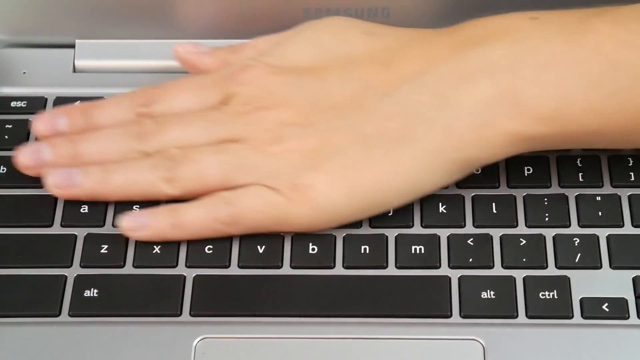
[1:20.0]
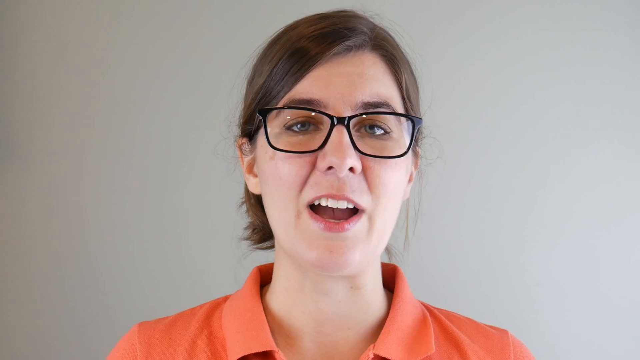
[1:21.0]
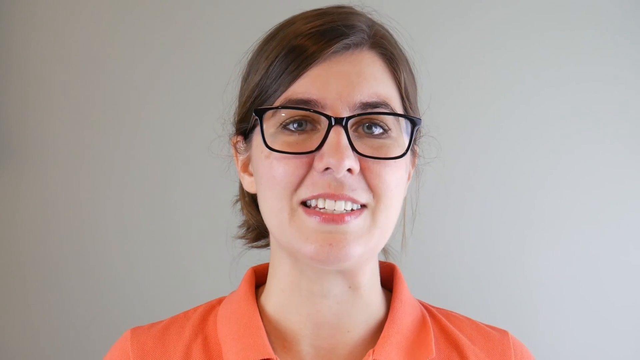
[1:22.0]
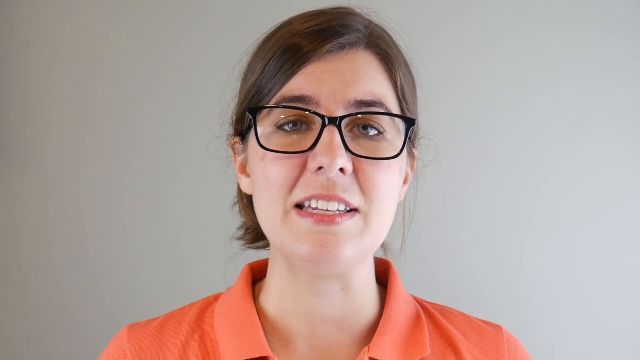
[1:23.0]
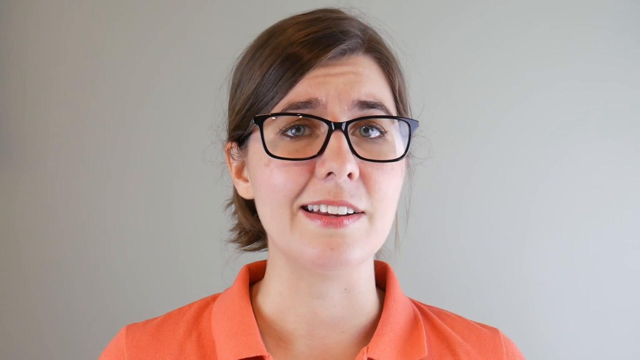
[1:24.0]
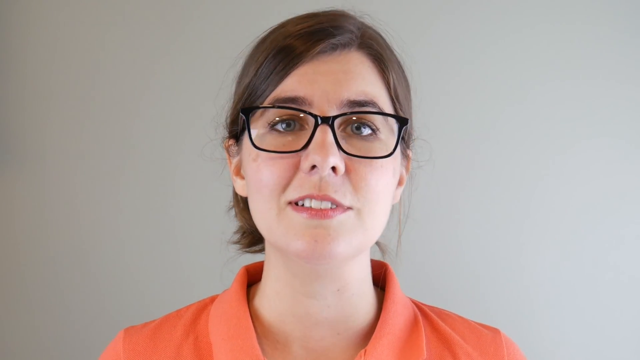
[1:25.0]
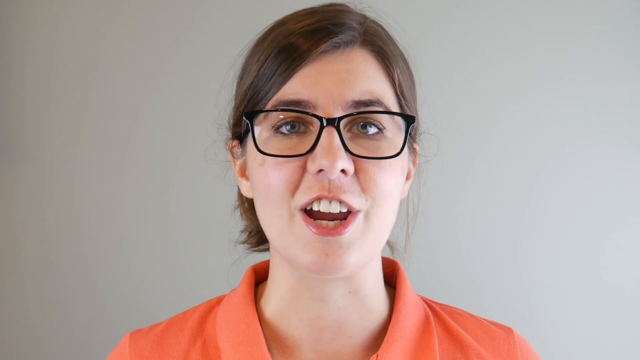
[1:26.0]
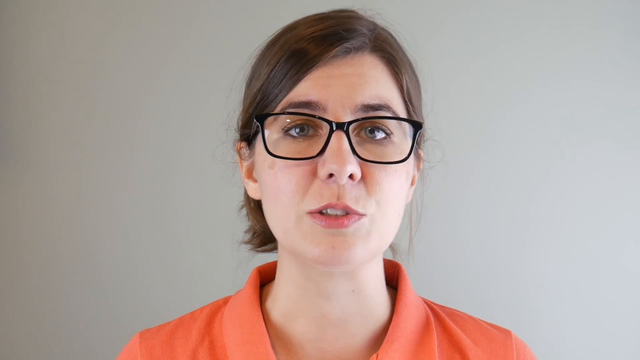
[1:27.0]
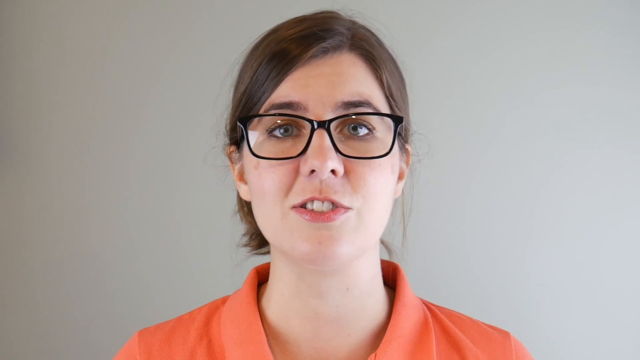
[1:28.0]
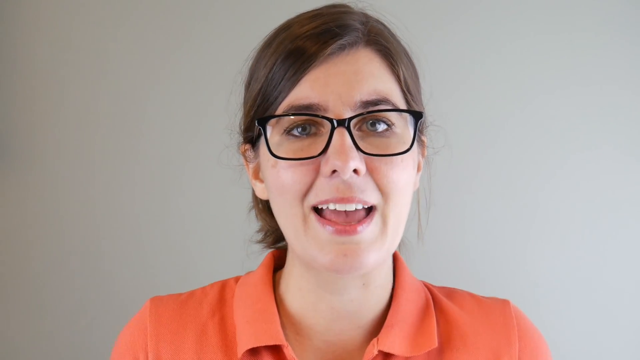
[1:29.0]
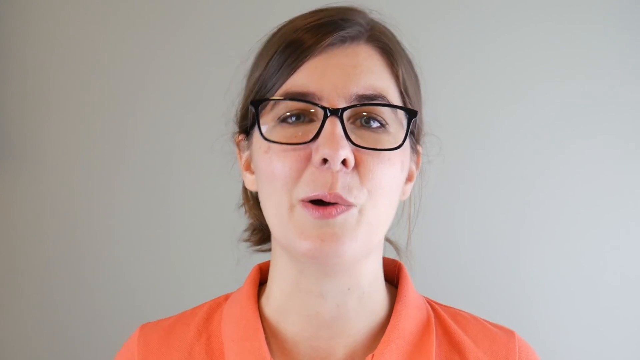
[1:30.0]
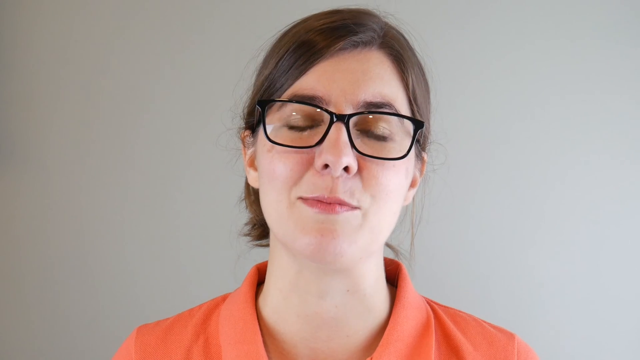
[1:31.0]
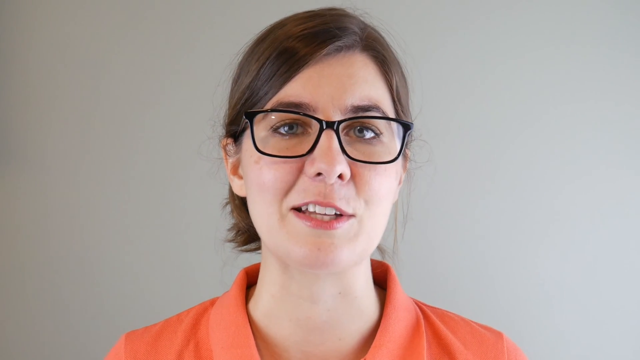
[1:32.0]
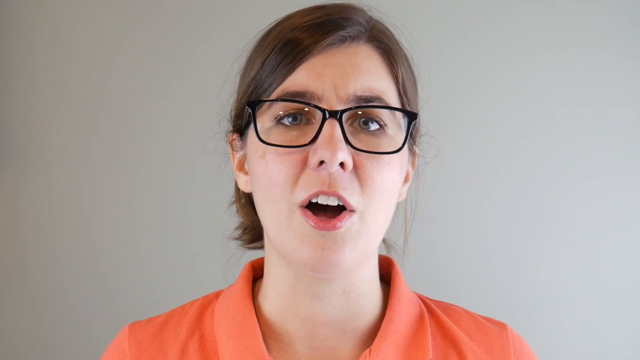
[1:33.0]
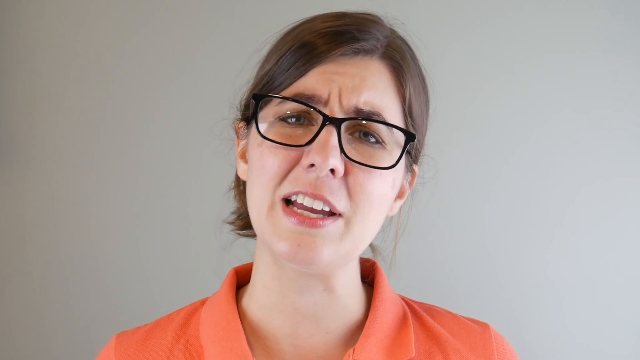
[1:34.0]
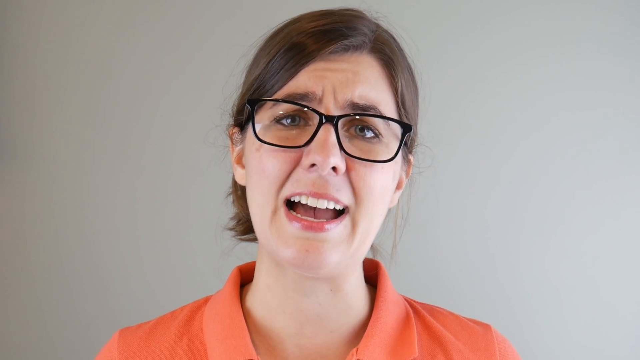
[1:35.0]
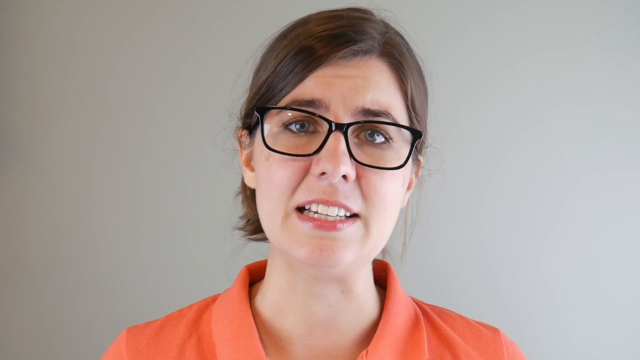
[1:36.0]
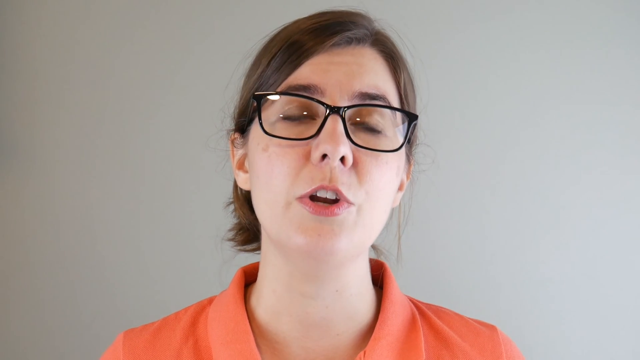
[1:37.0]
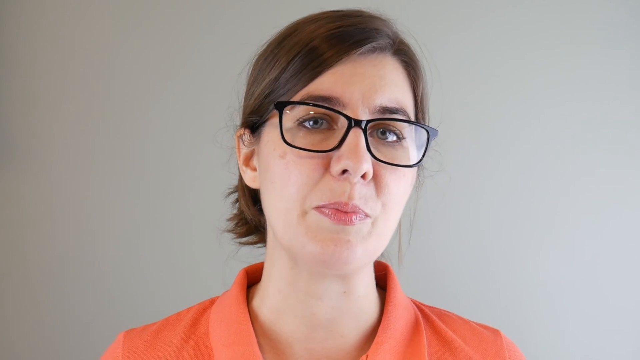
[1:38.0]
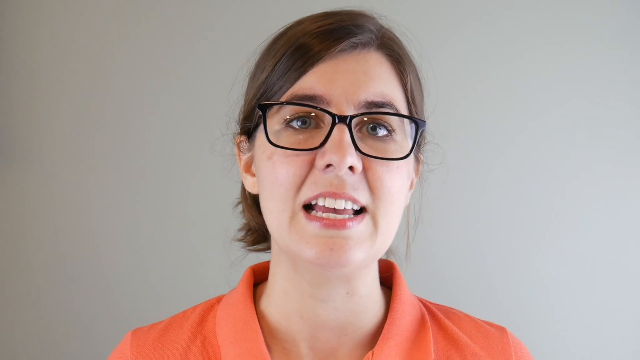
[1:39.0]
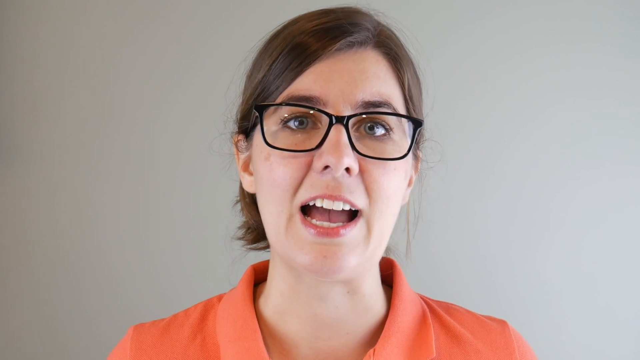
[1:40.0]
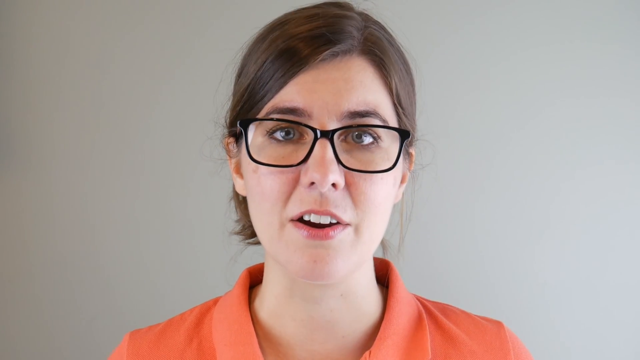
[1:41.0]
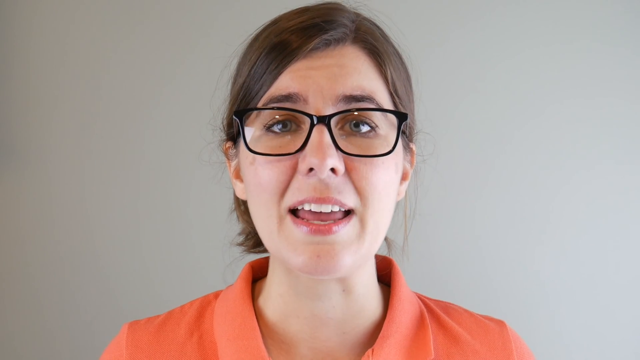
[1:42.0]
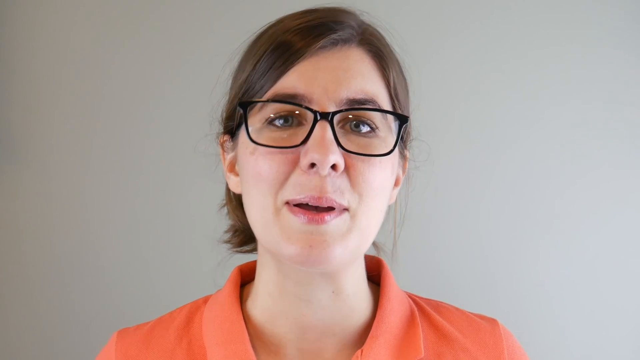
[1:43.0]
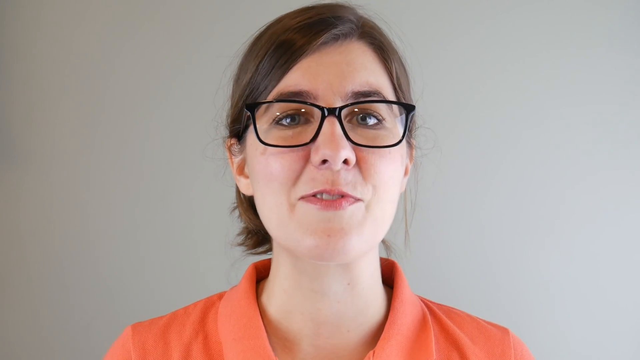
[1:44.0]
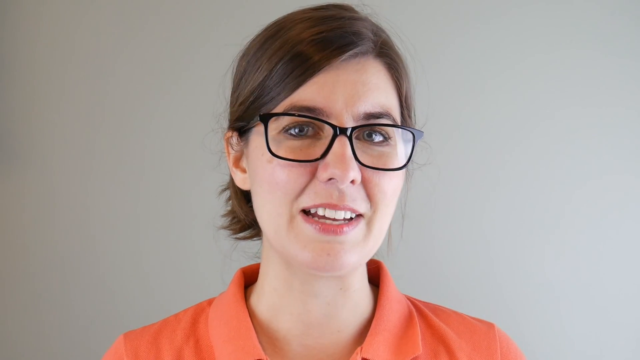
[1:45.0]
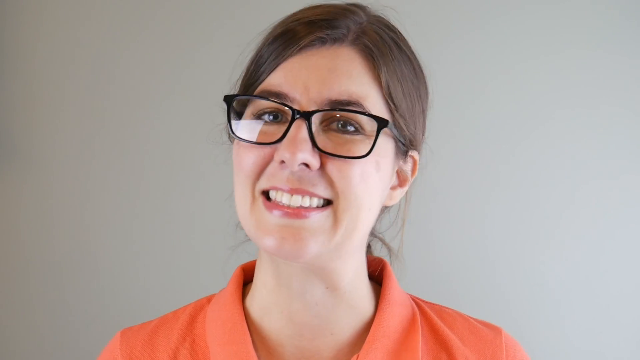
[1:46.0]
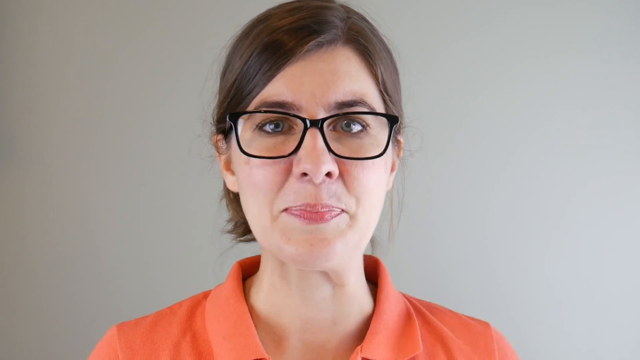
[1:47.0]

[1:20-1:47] His palm and fingers kind of rub back and forth over various keys on the keyboard. Then a woman appears, seen from the neck up, looking directly at the camera. She has brown hair and black glasses, and she may have been the one doing the repair. She speaks into the camera in front of a plain wall that looks white or gray. She moves her head slightly up and down as she speaks, shrugs her shoulders at one point, and kind of rolls her eyes up and back down. She keeps talking, seemingly about what was just completed, smirking for the rest of the video.